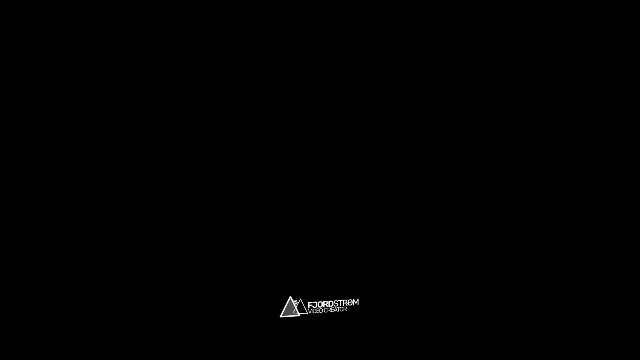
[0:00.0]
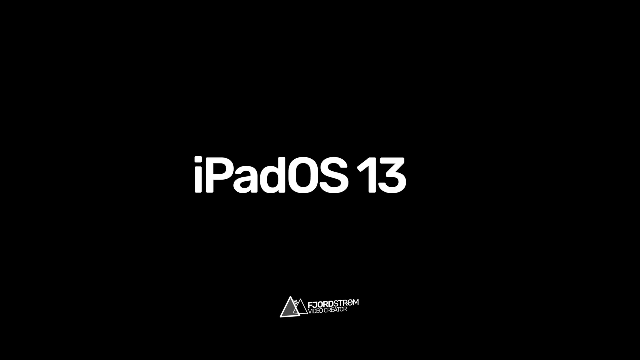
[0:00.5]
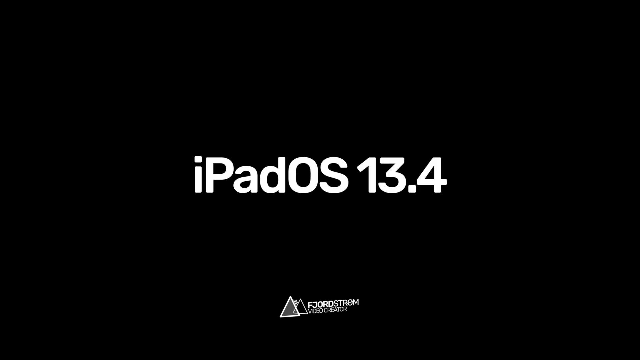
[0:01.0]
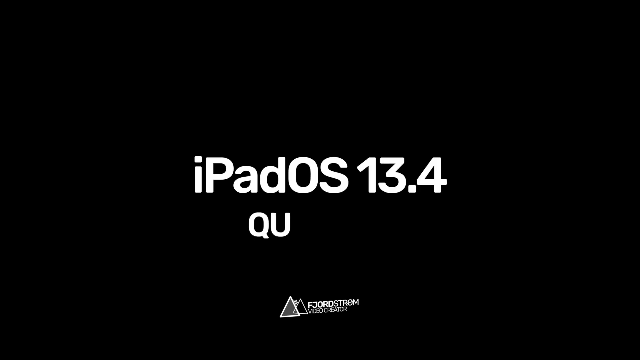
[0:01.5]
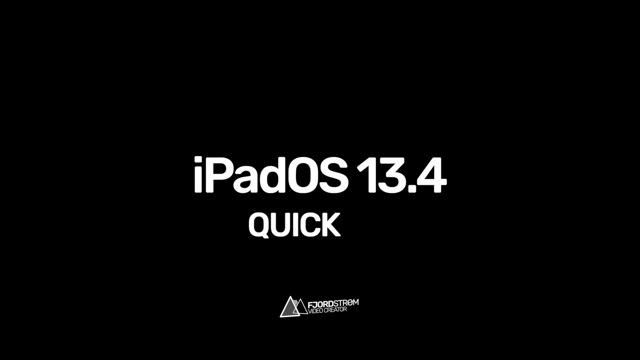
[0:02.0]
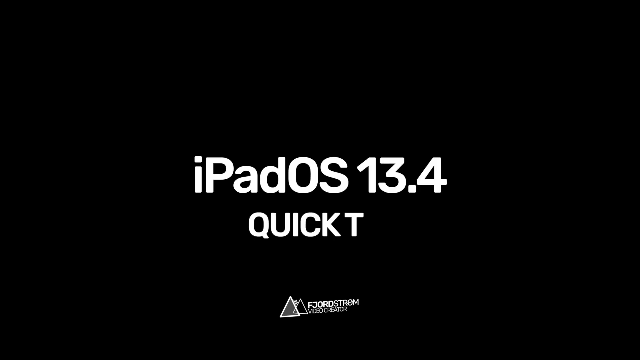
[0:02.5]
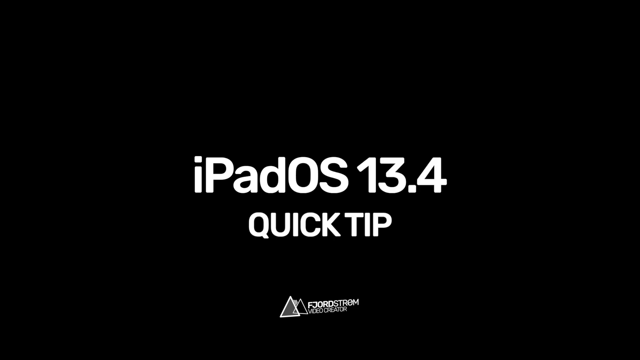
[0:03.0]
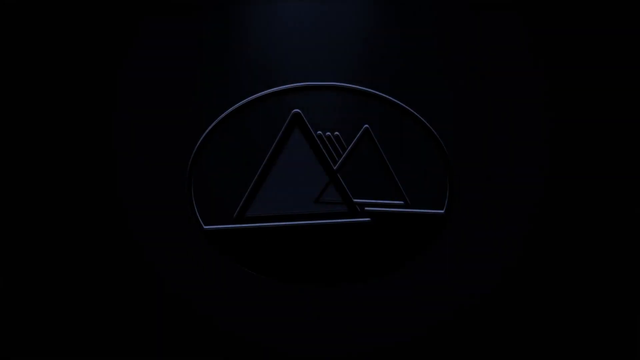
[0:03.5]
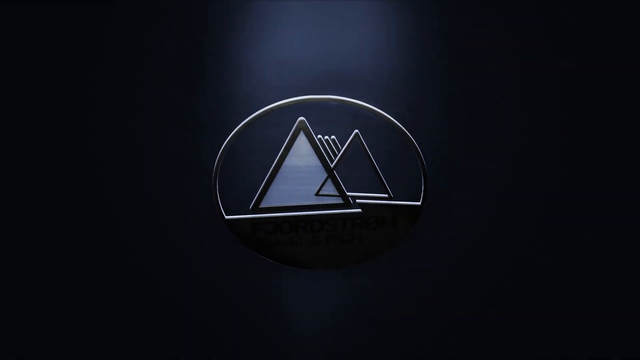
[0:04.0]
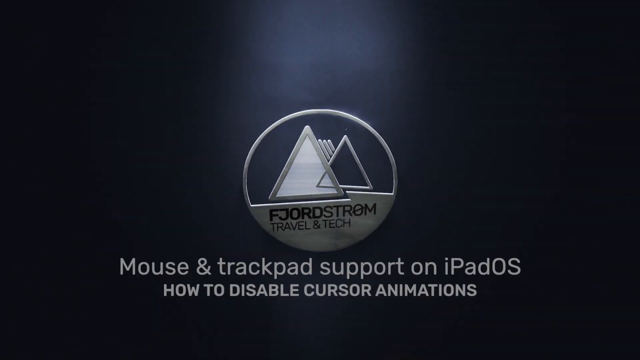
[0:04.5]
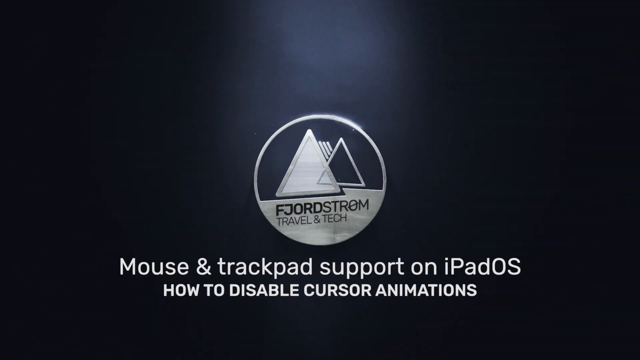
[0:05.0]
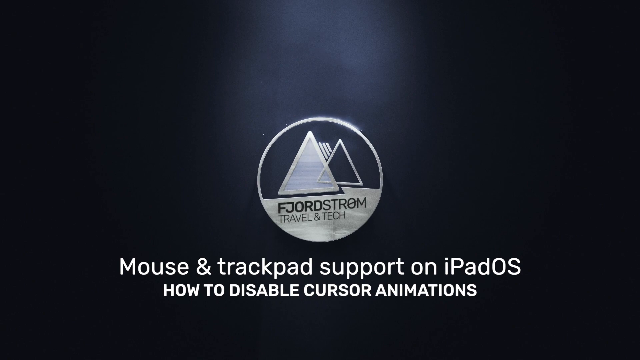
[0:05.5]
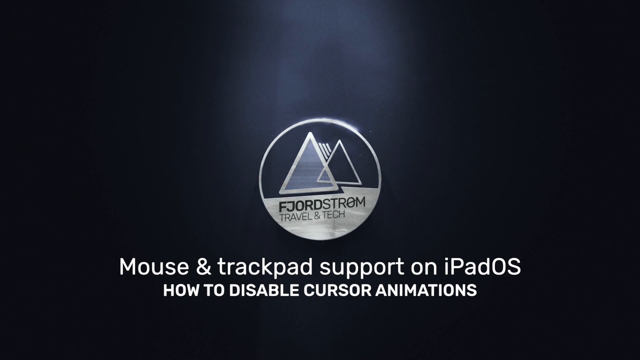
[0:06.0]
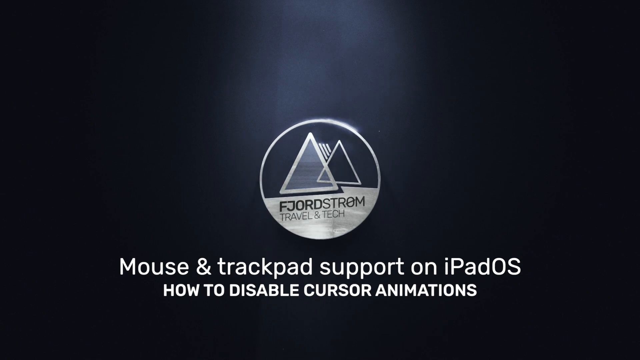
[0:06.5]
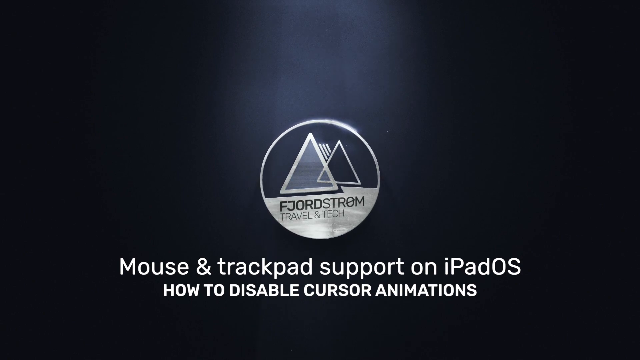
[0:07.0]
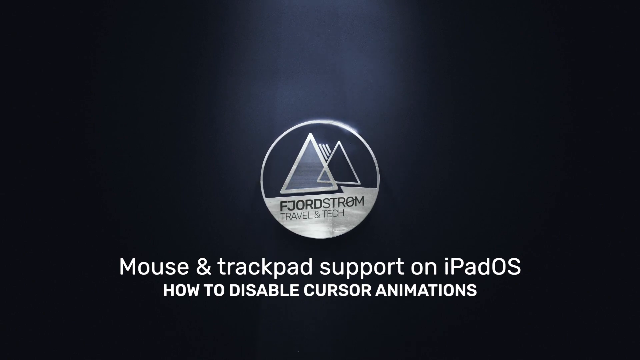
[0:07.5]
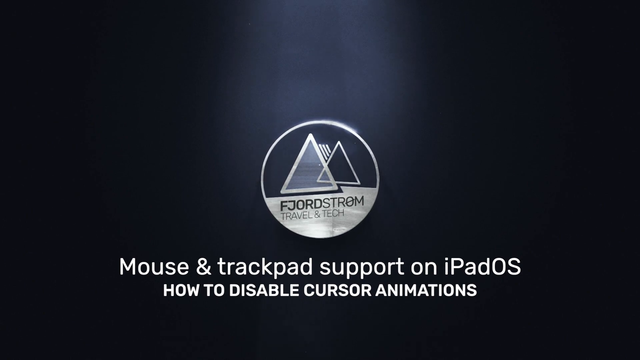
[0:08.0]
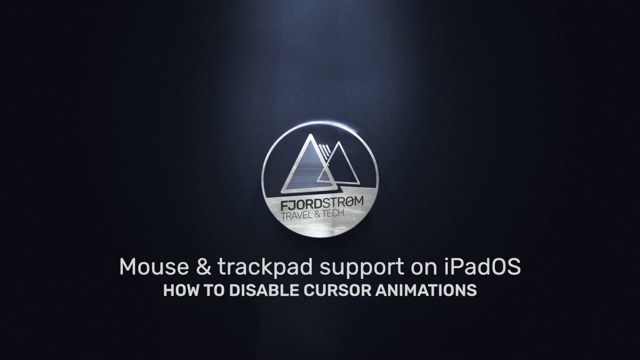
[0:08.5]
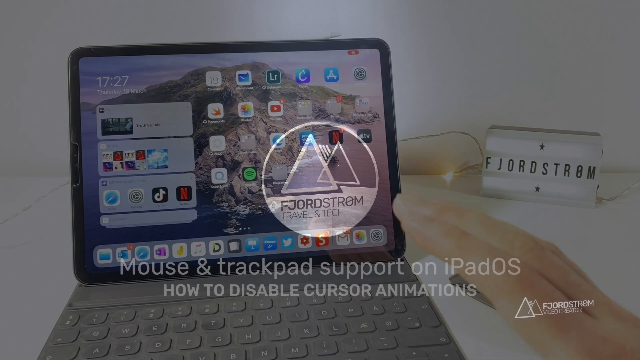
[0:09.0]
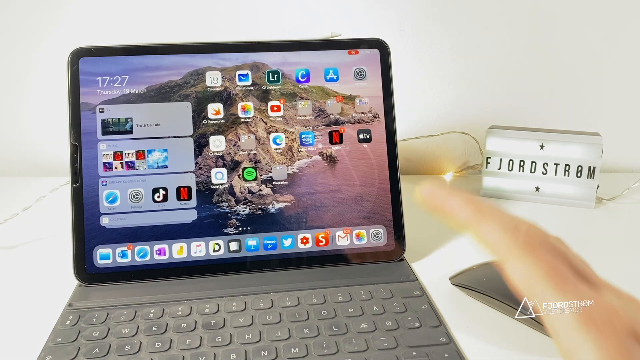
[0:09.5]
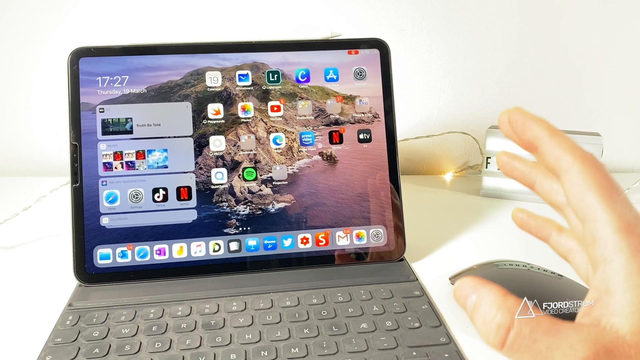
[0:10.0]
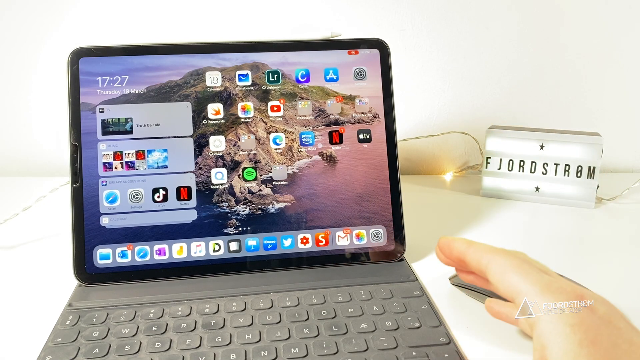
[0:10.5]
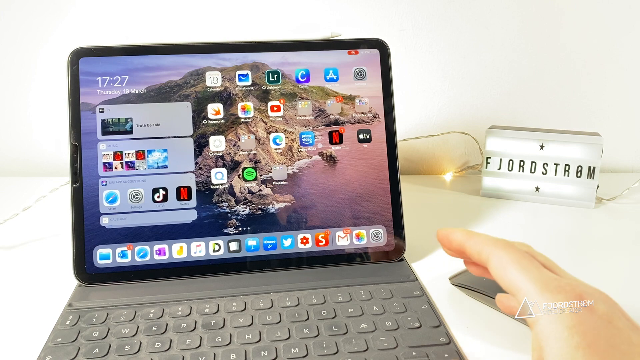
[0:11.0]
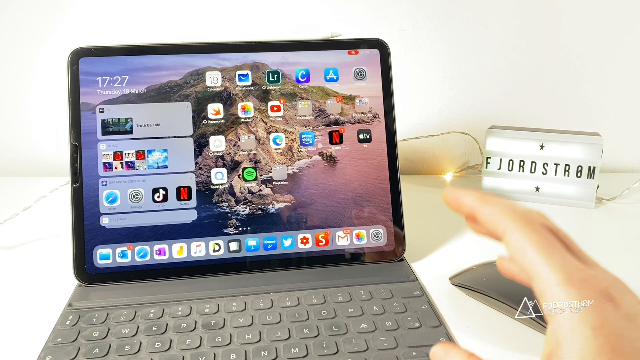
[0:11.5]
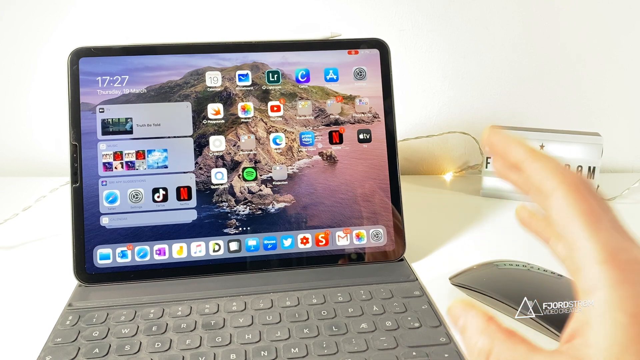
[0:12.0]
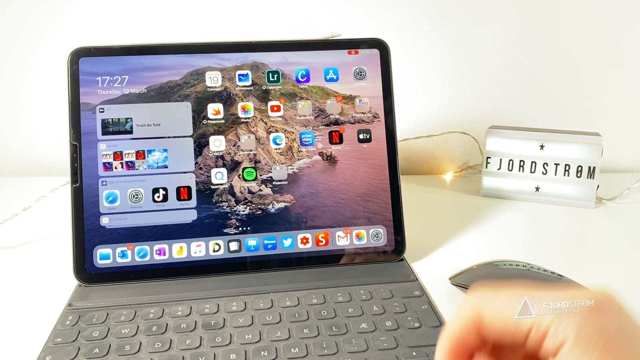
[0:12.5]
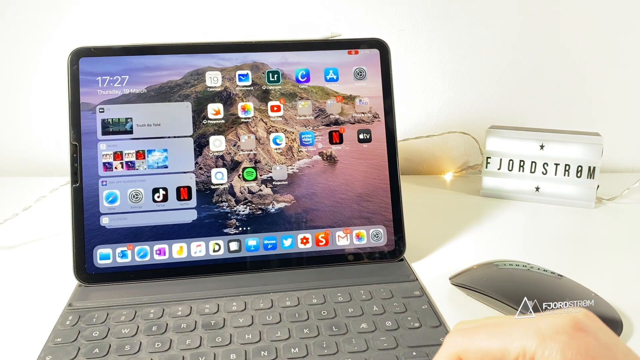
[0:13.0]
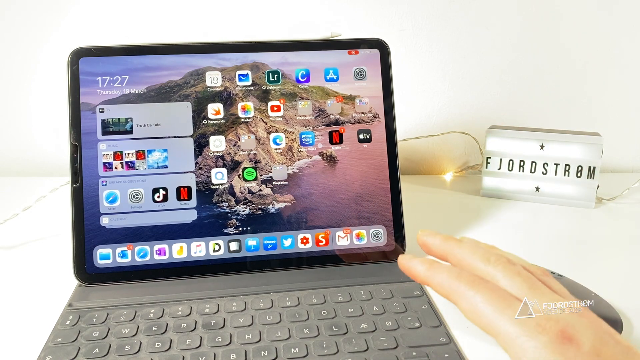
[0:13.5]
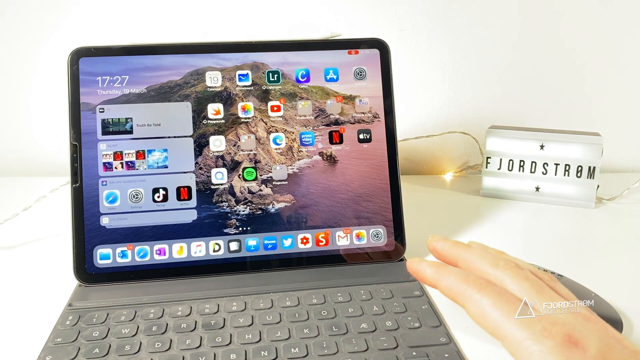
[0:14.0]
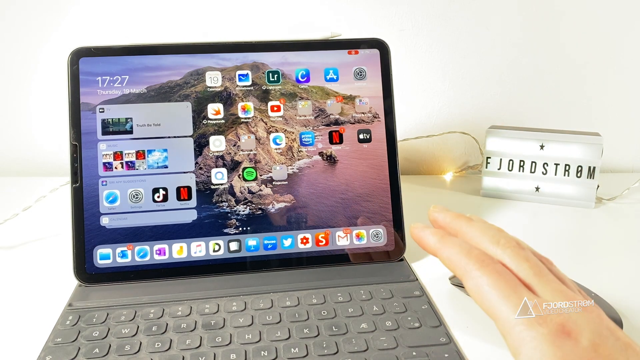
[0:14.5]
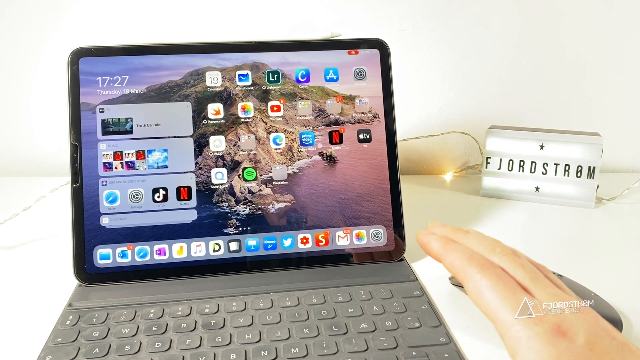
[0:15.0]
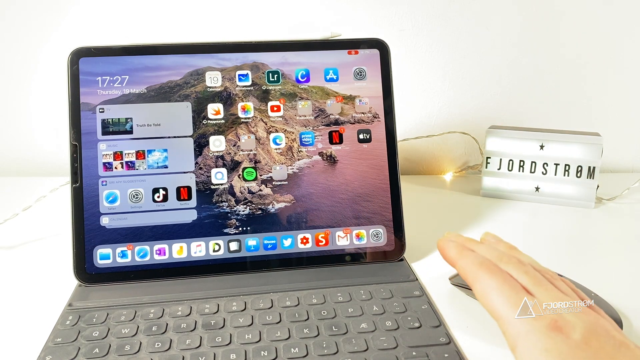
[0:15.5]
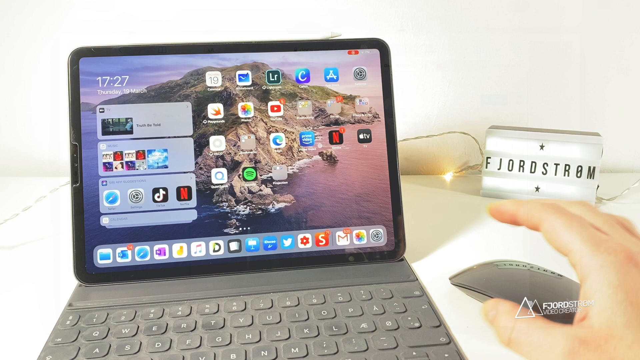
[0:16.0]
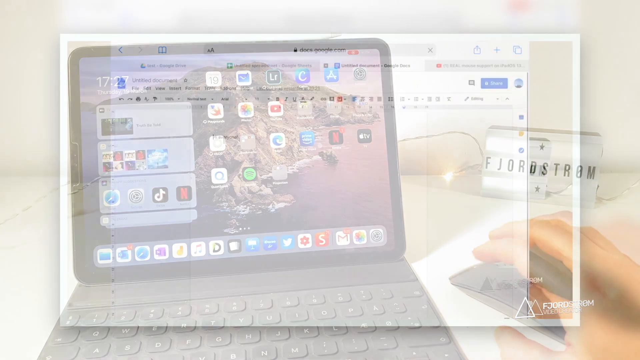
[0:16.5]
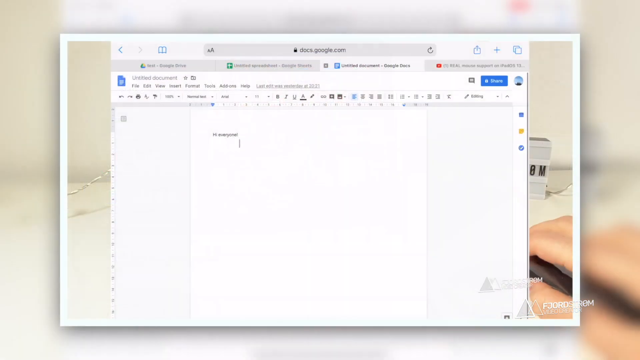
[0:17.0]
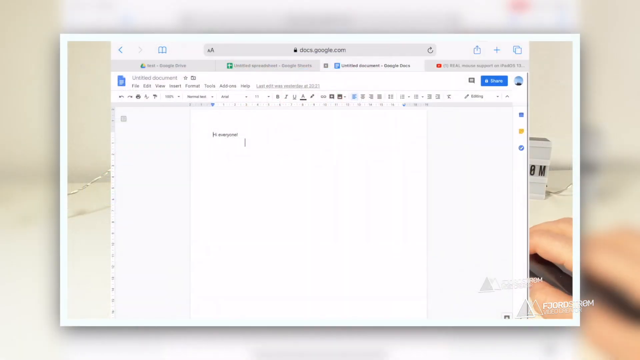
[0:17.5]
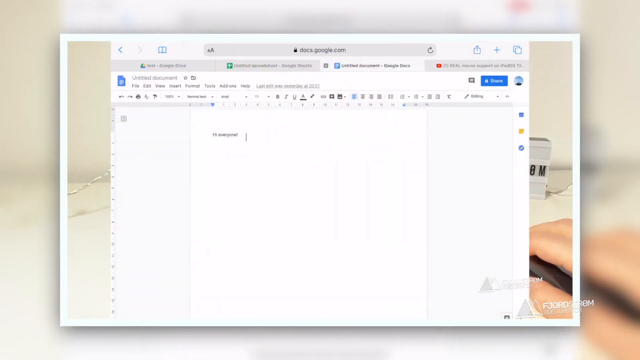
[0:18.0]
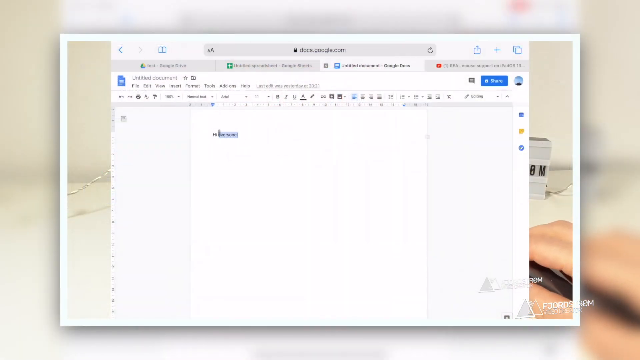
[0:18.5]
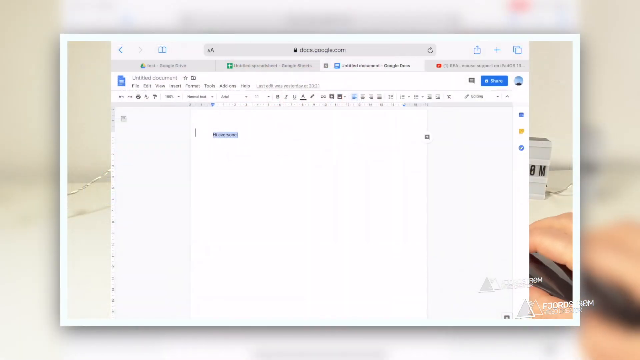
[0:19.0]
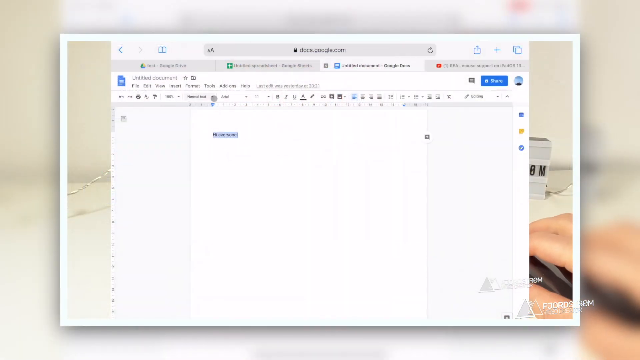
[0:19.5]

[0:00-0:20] The video opens on a black background with white text at the bottom that reads "F. Georgestrom, video creator." Triangles in gray and black with white outlines appear. Bold white text pops up reading "iPad OS 13.4," and more text gradually appears reading "Quick Tip." A logo for "F. Georgestrom, travel and tech" pops up, with a somewhat chrome, metallic look. Above it is a blue glow with more white text: "mouse and trackpad support on iPad OS, how to disable cursor animations." The video then cuts to a man or person with a small tablet in front of them. The screen shows many icons, including YouTube, Photos, Lightroom, Canva, Netflix, Spotify, TikTok and Safari, and the time reads 1727, Thursday, March 19th. His mouse is lying next to the tablet, and he moves his hand while talking. He then goes to a Google Docs screen, where the text "Hi Everyone" is visible. He seems to outline or hover over it, then goes to another box.